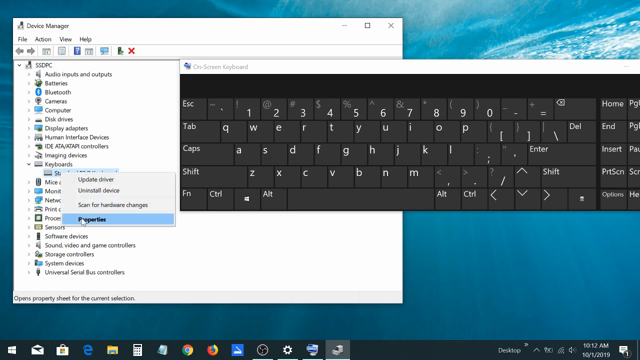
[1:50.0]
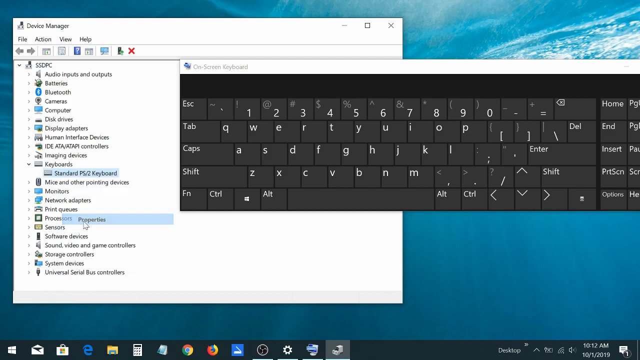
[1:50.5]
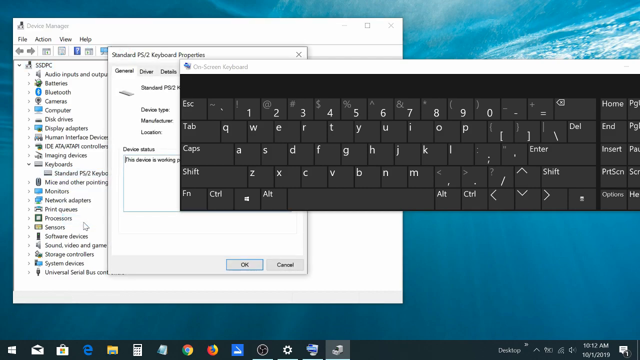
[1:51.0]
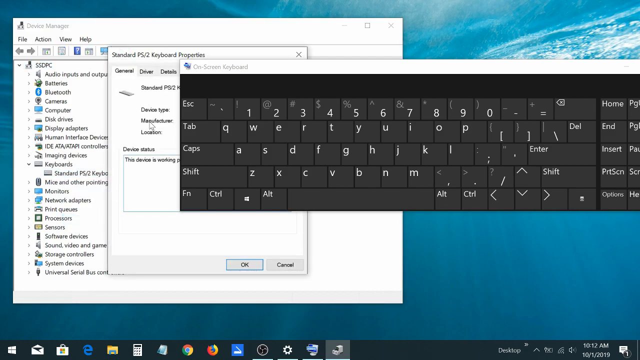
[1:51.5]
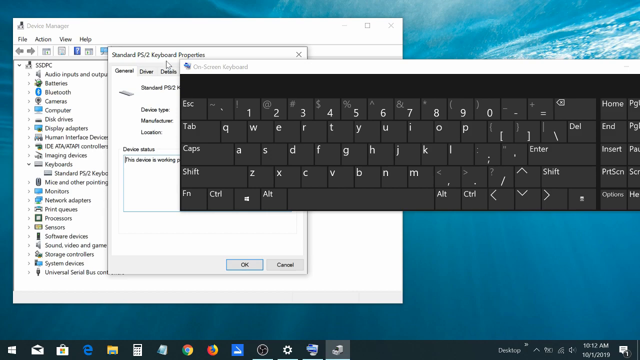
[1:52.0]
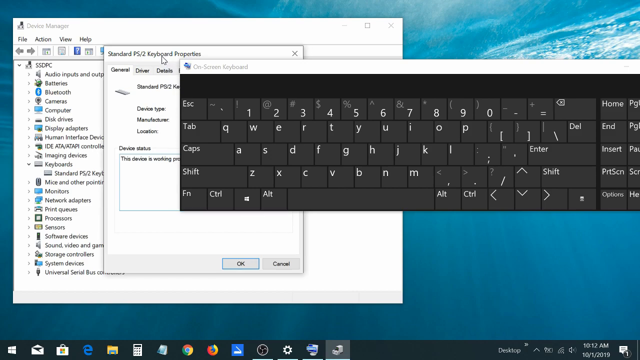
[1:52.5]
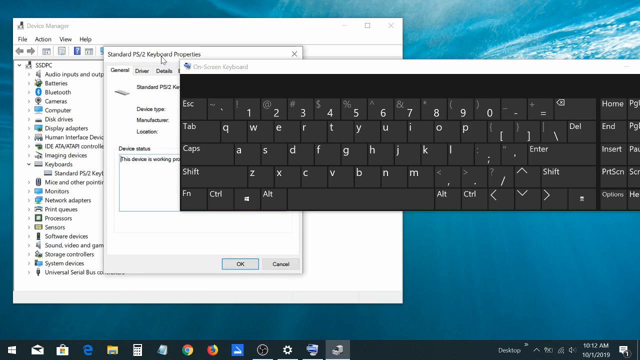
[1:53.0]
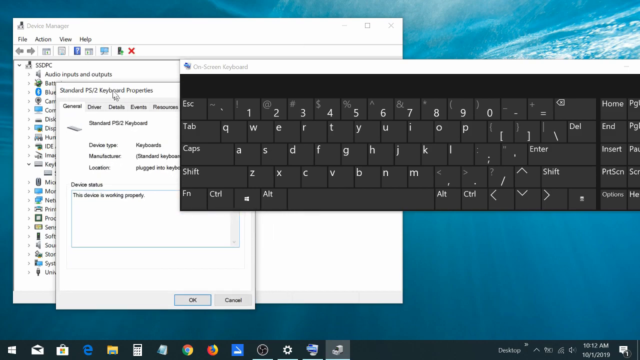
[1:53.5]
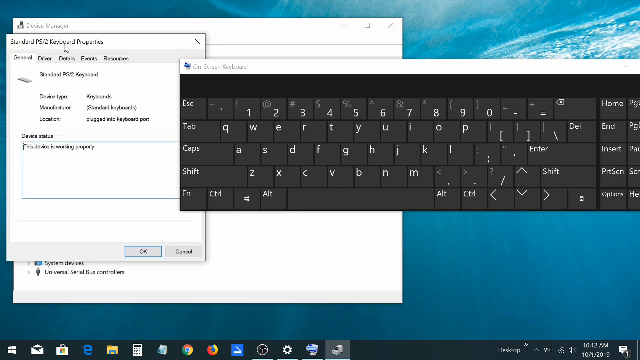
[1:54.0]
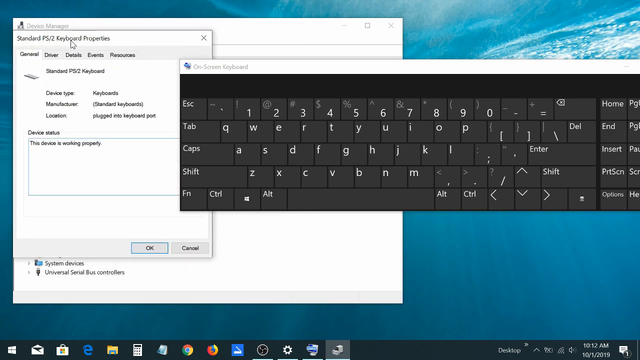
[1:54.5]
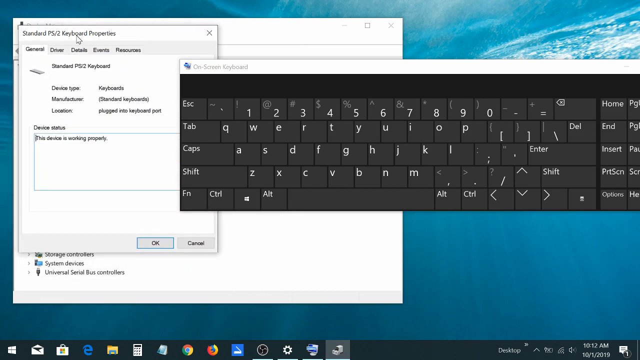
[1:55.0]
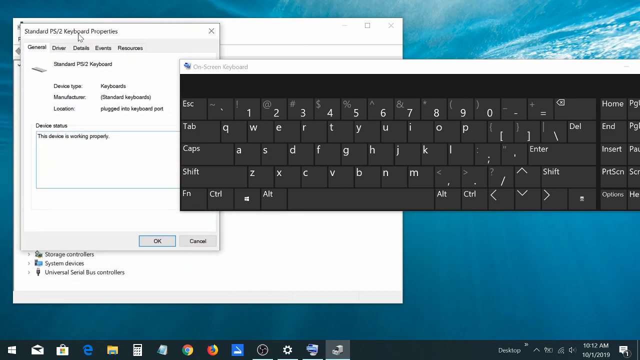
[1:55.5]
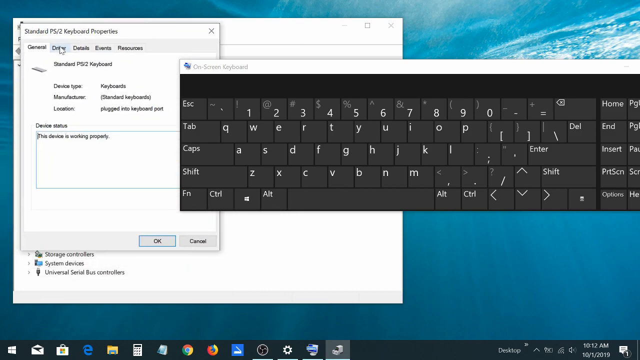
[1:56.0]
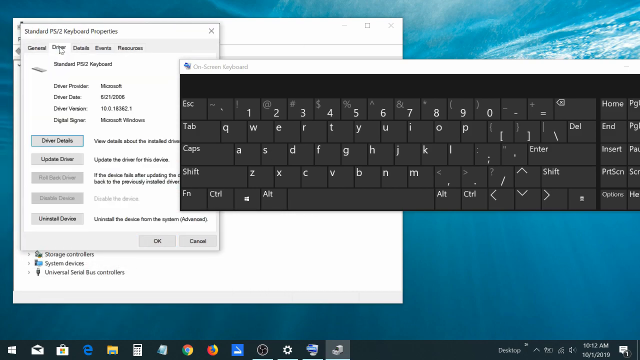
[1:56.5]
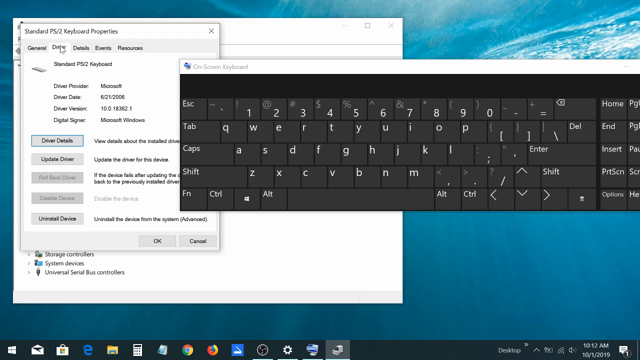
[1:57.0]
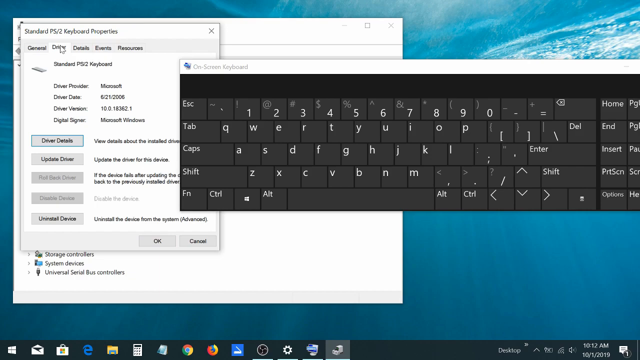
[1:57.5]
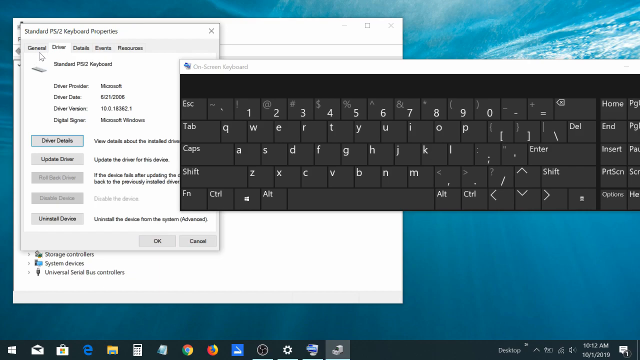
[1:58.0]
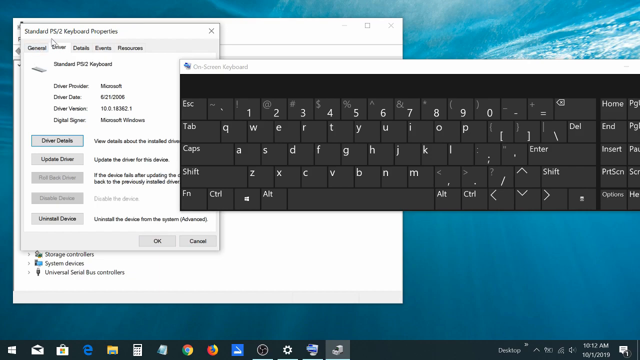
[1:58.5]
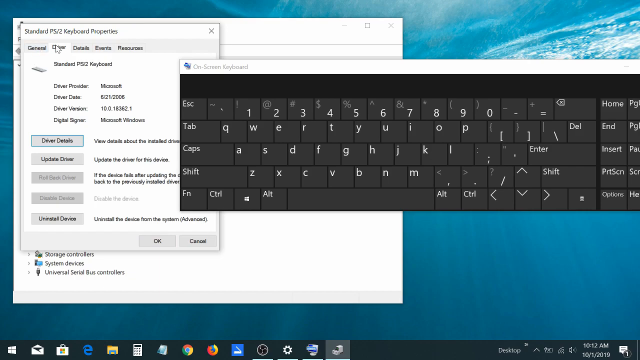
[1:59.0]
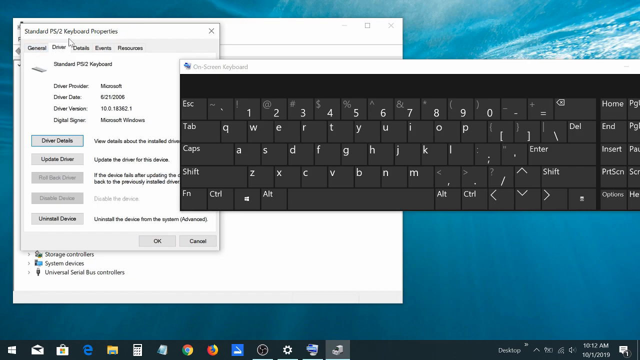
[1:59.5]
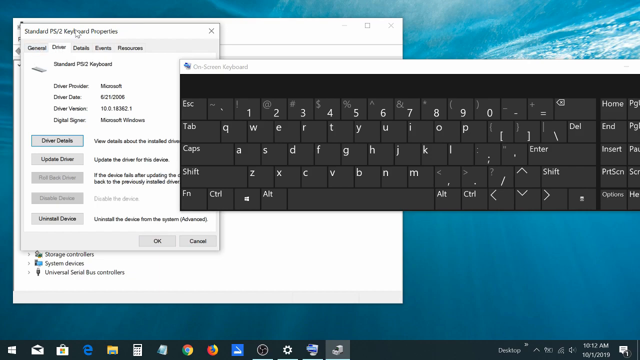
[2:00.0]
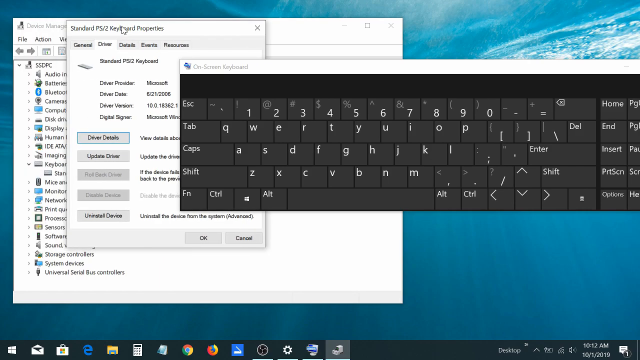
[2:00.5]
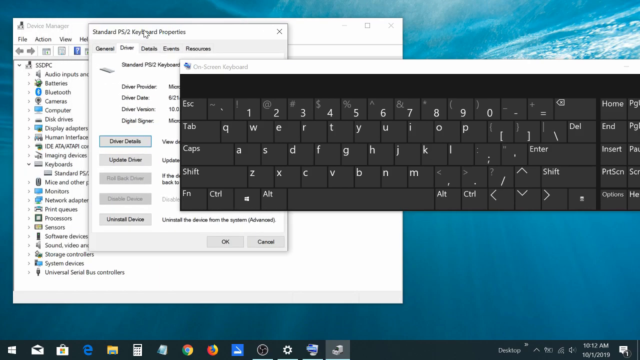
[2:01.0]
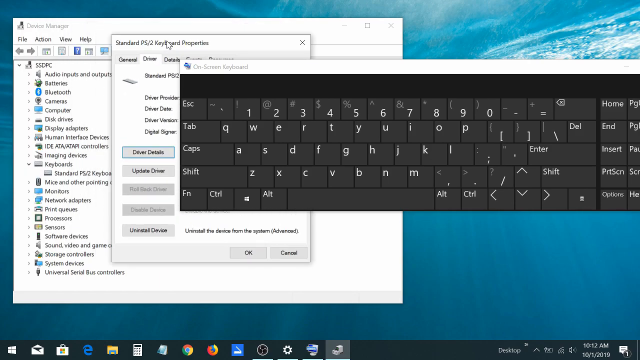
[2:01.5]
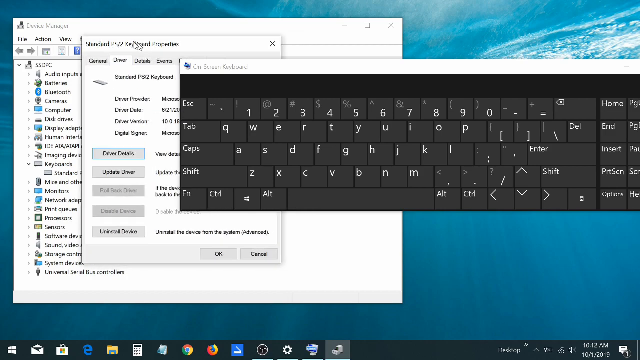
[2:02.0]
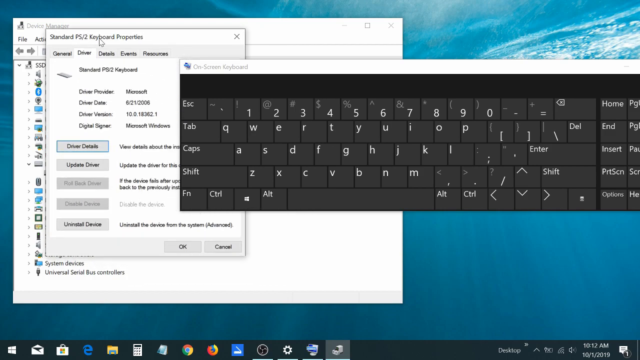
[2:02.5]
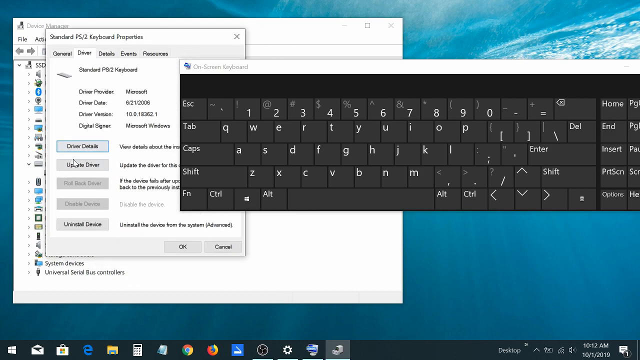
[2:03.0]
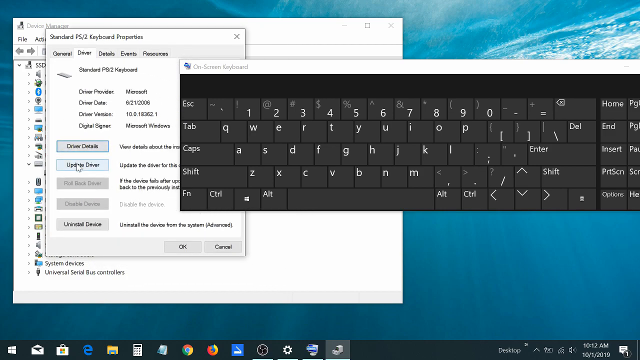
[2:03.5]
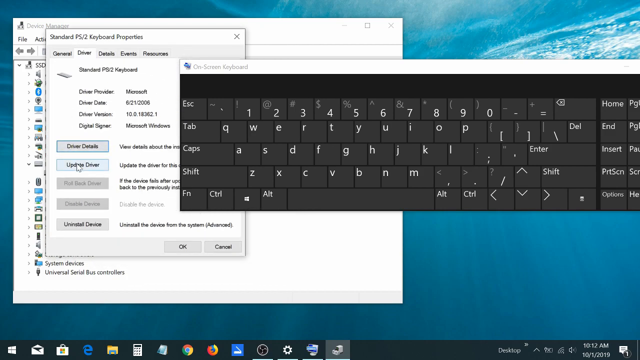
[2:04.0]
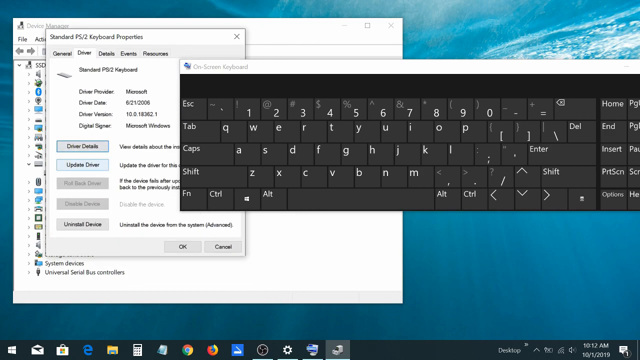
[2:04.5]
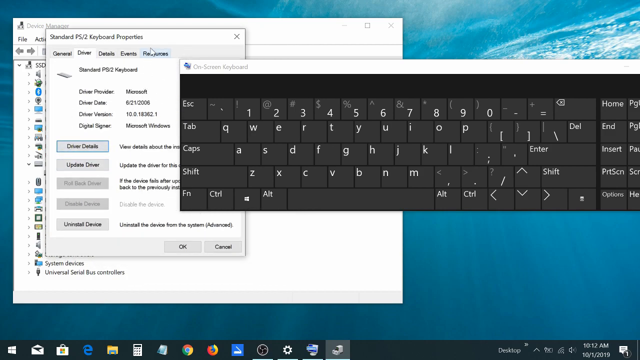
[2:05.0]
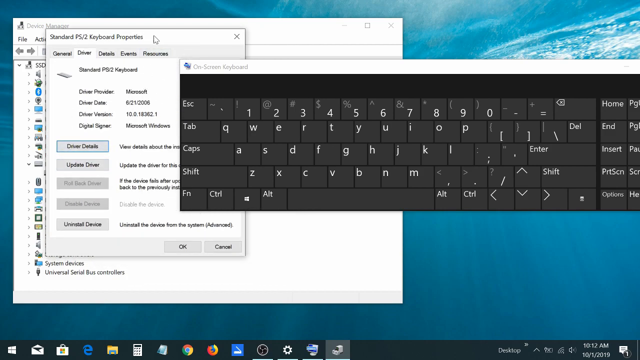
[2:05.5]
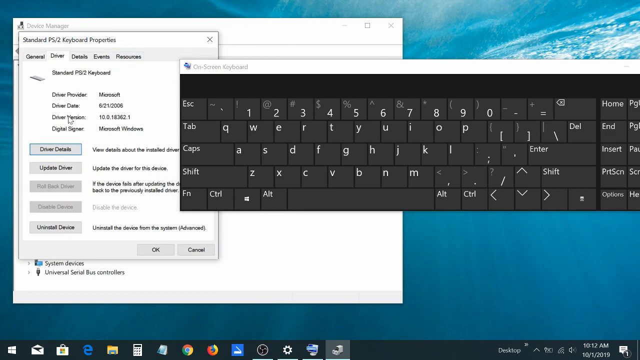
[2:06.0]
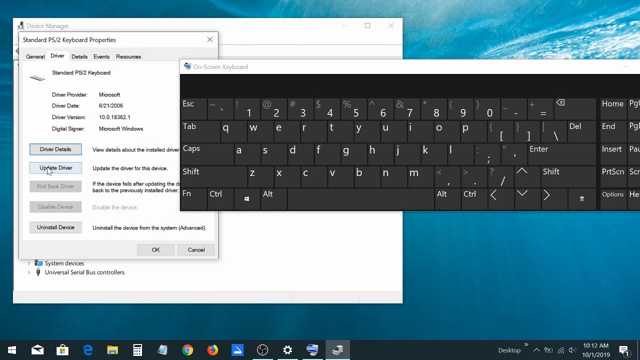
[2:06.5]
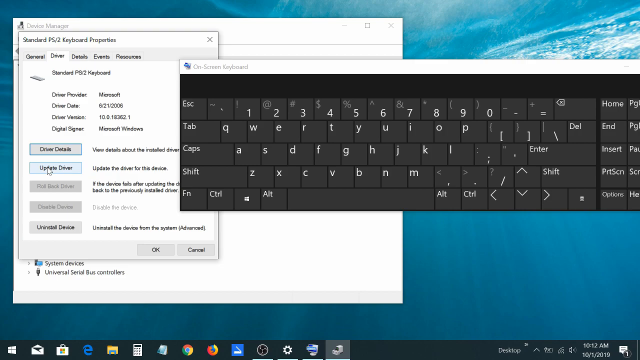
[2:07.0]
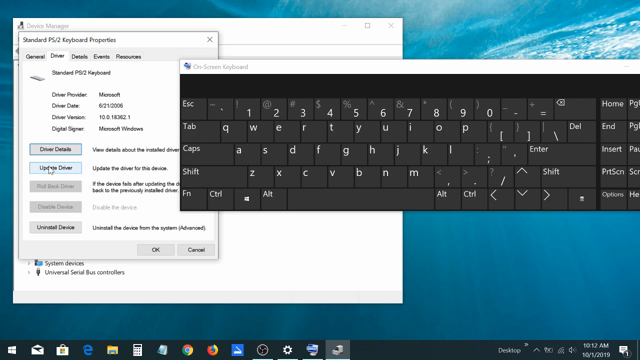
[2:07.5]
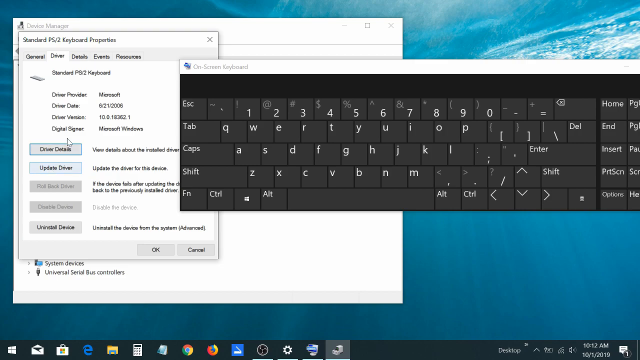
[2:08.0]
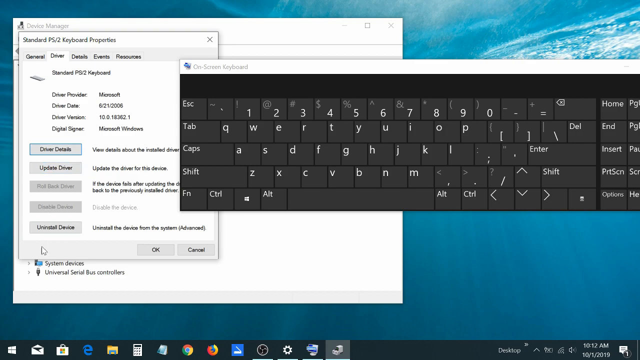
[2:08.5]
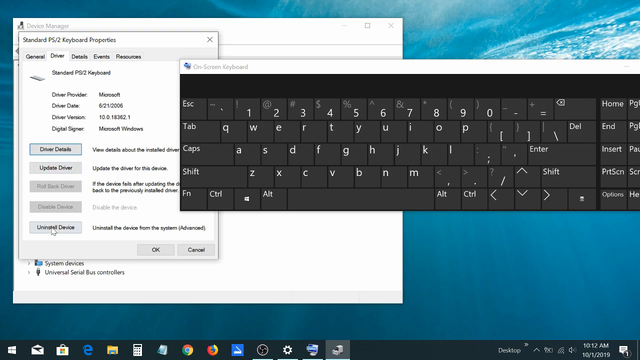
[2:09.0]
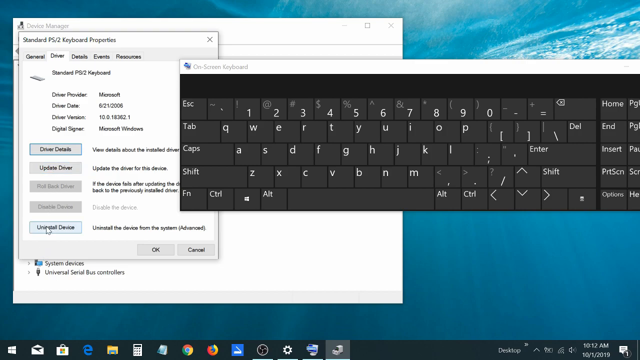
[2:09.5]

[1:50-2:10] The on-screen keyboard is in the forefront and the Device Manager box is open, blocking the view of the ocean wallpaper with the scuba diver. The person clicks on properties for the keyboard, opens the keyboard's properties and goes to the driver section. They move the keyboard's properties box over and highlight update driver without clicking it. They then move down quickly and end up highlighting uninstall device.